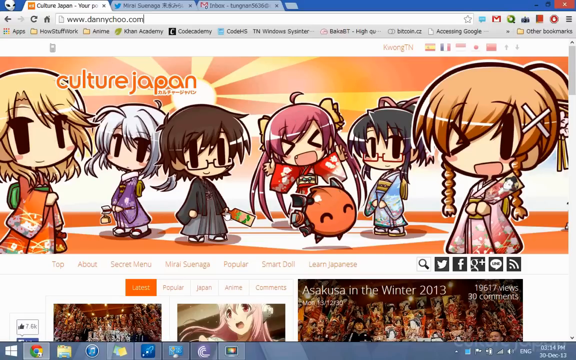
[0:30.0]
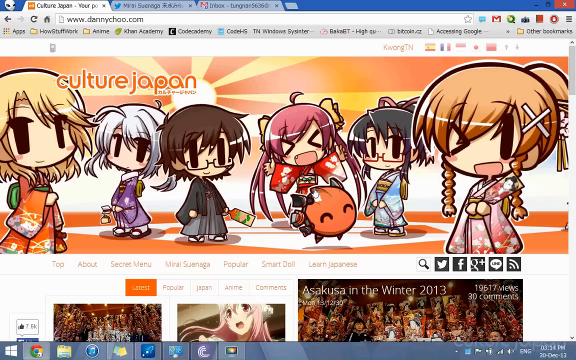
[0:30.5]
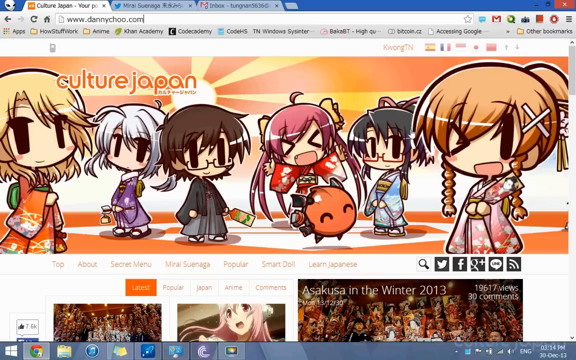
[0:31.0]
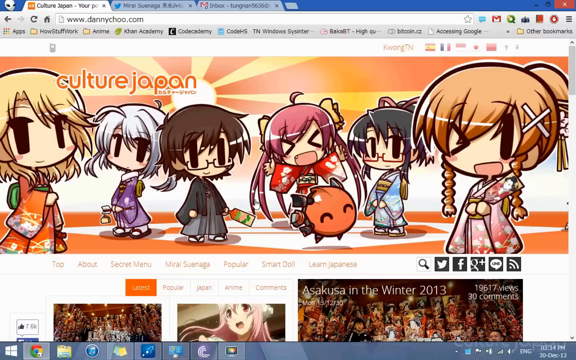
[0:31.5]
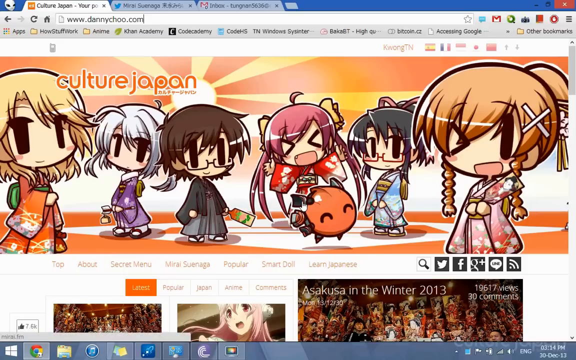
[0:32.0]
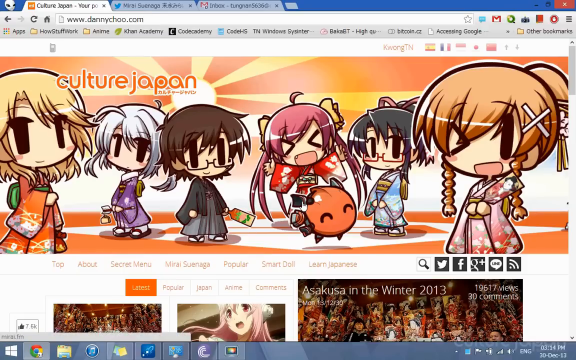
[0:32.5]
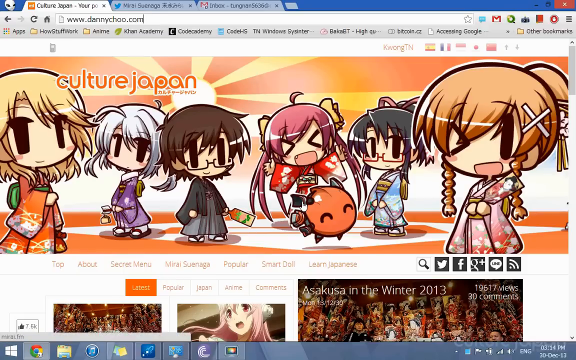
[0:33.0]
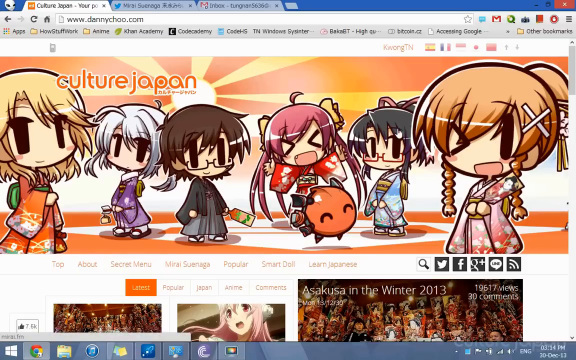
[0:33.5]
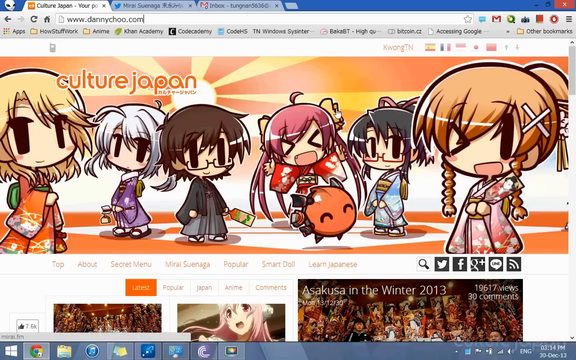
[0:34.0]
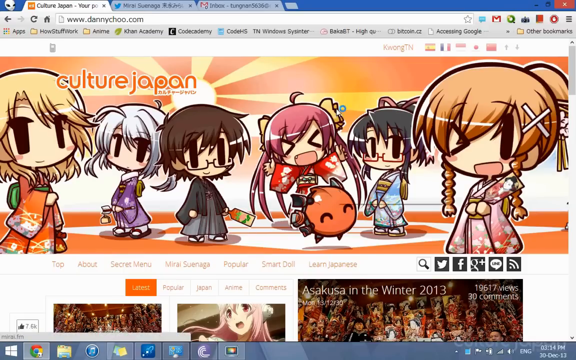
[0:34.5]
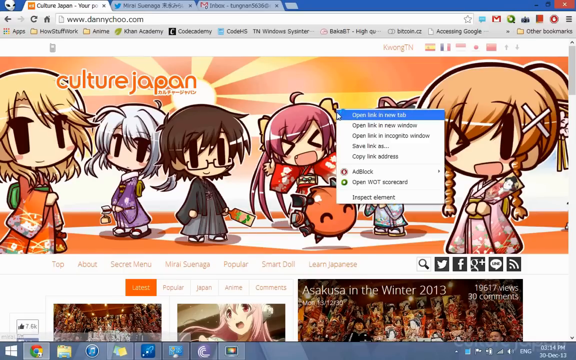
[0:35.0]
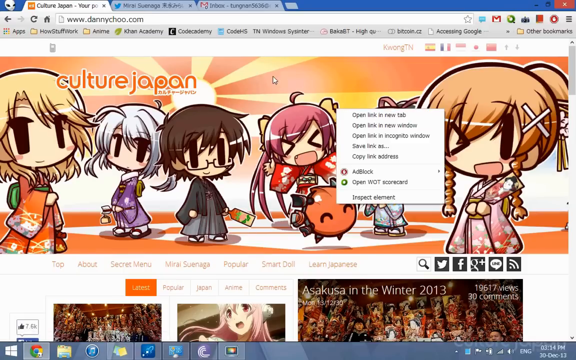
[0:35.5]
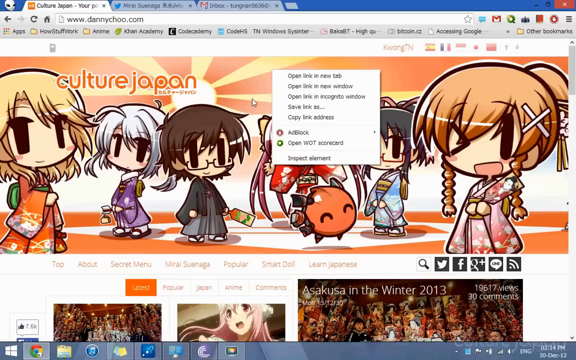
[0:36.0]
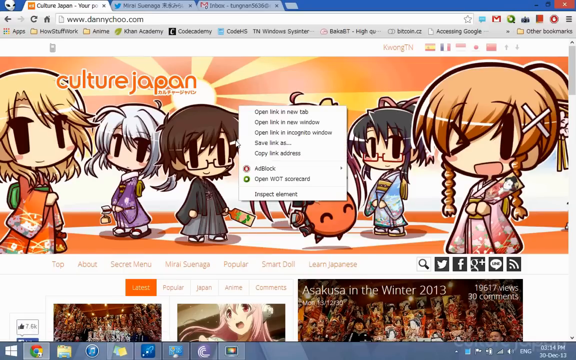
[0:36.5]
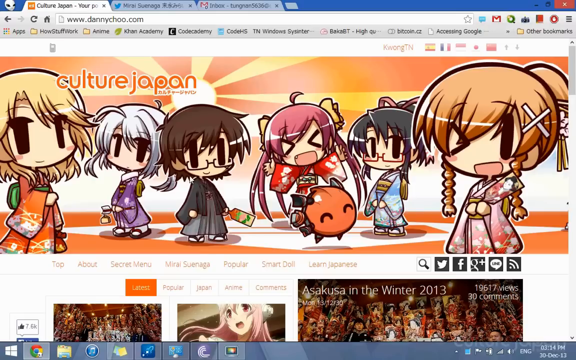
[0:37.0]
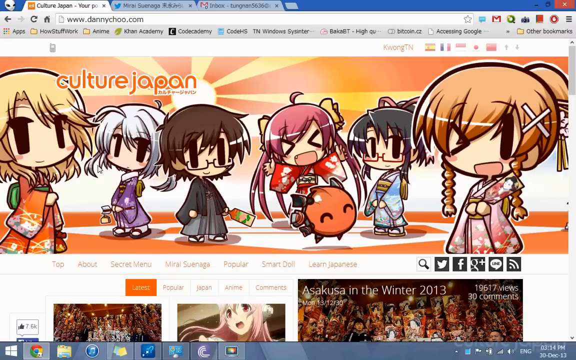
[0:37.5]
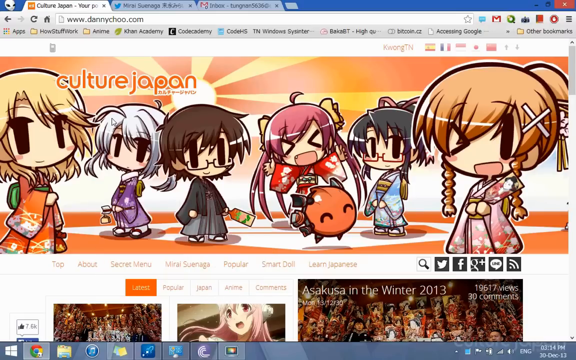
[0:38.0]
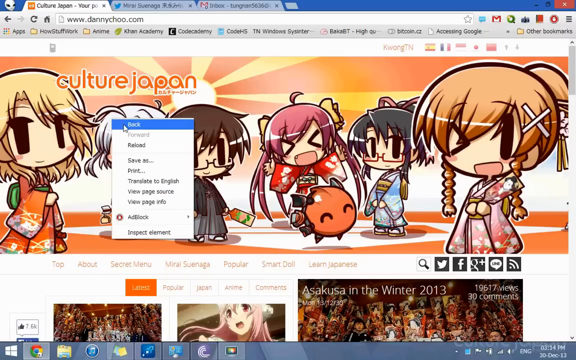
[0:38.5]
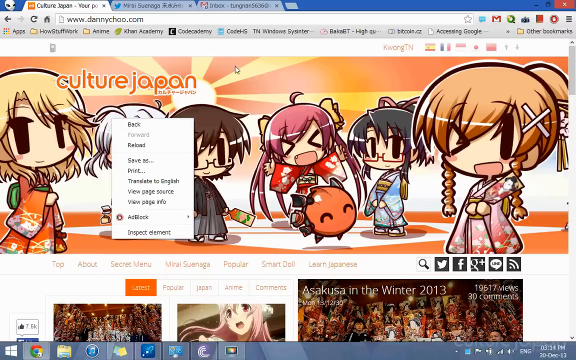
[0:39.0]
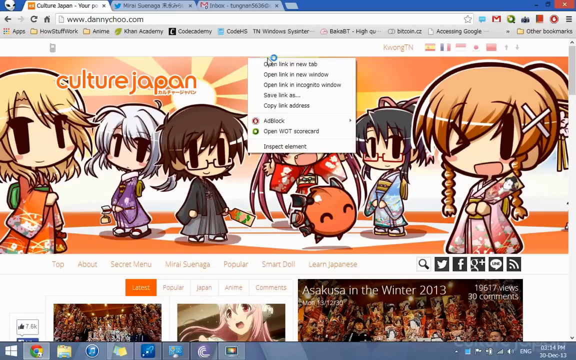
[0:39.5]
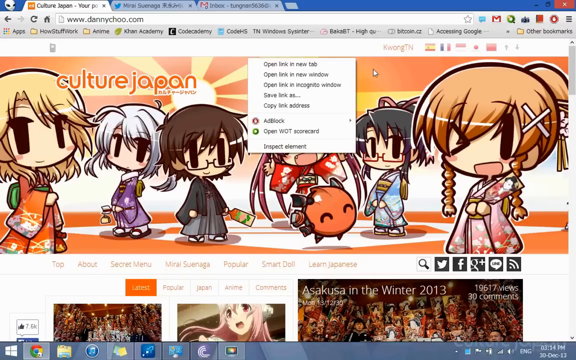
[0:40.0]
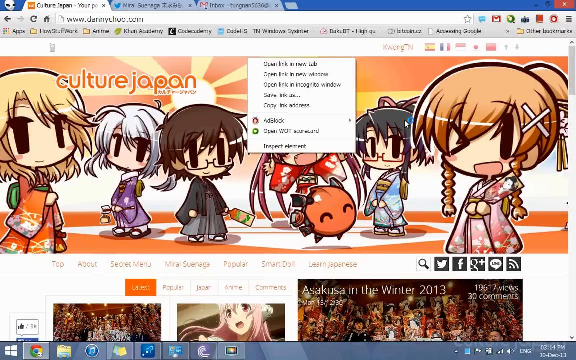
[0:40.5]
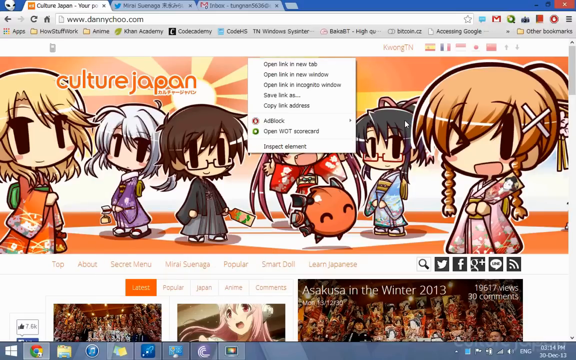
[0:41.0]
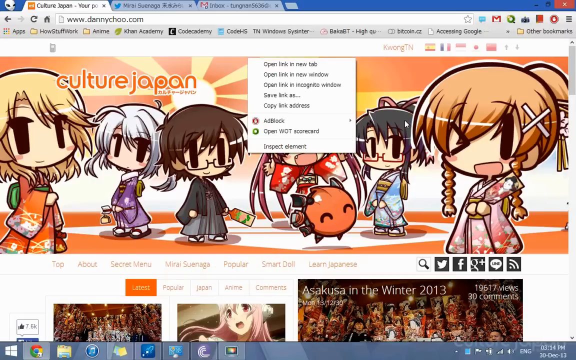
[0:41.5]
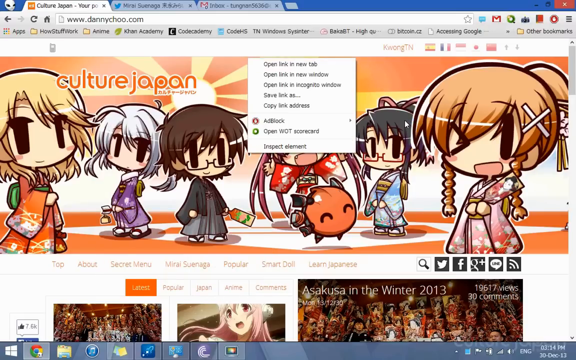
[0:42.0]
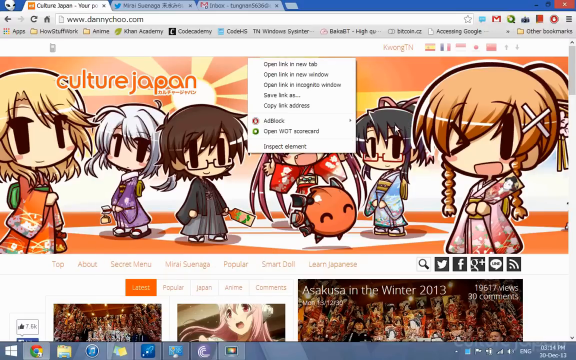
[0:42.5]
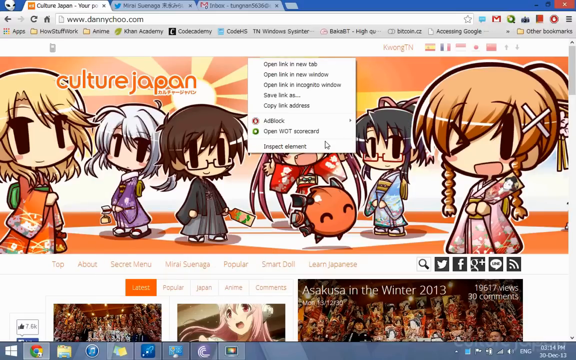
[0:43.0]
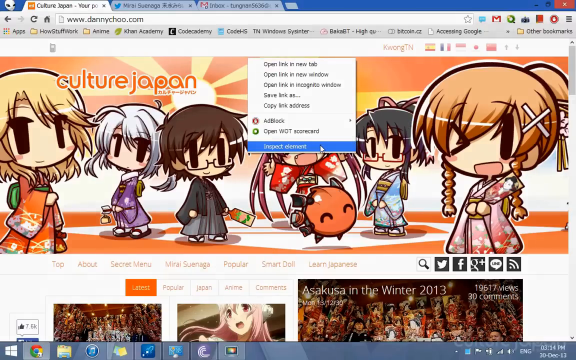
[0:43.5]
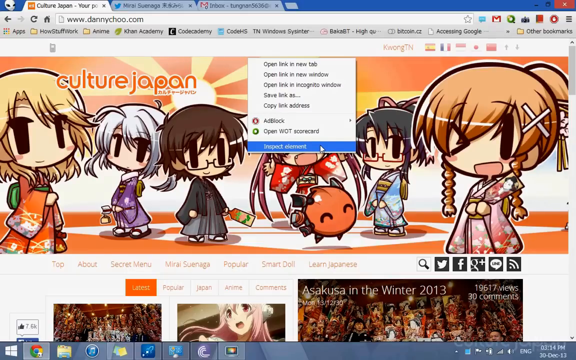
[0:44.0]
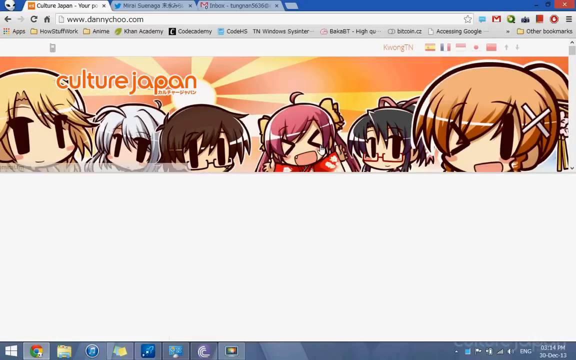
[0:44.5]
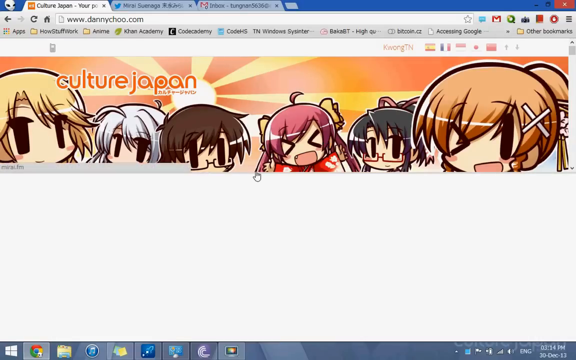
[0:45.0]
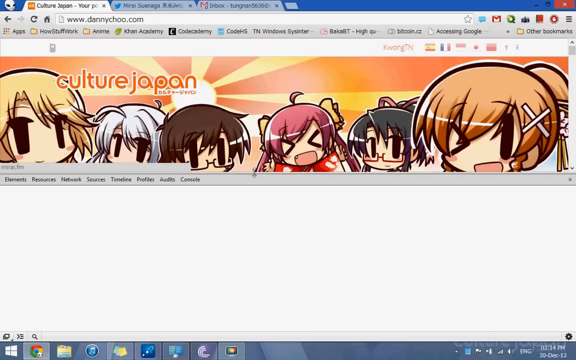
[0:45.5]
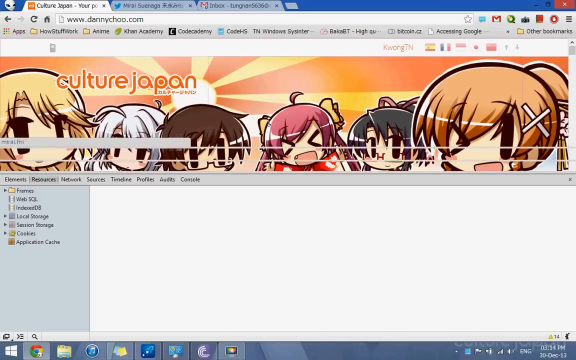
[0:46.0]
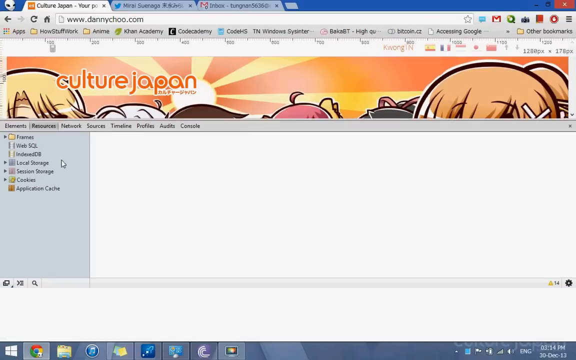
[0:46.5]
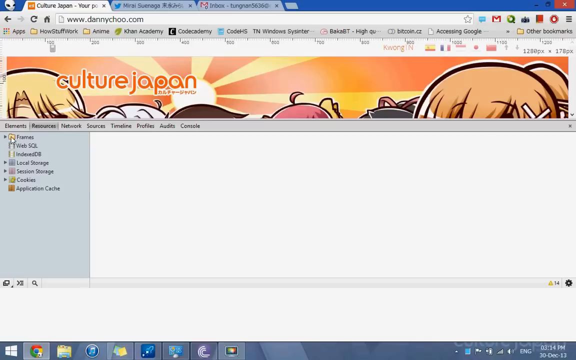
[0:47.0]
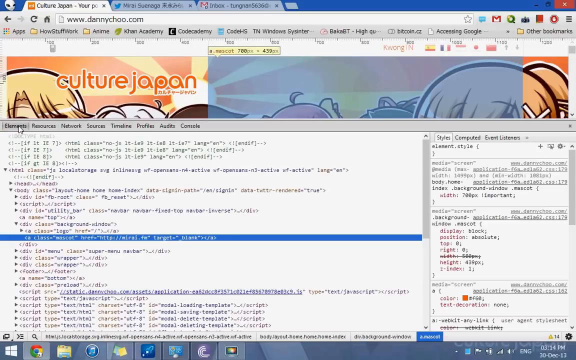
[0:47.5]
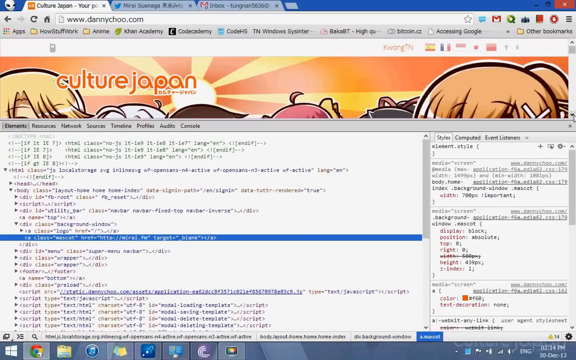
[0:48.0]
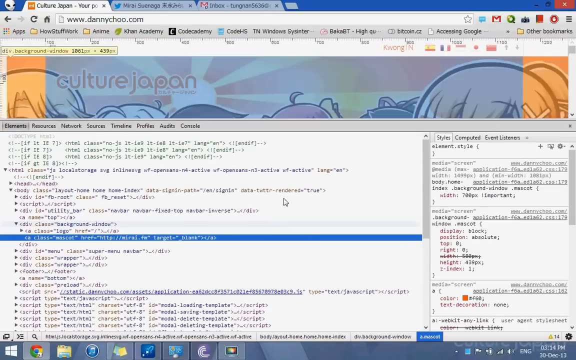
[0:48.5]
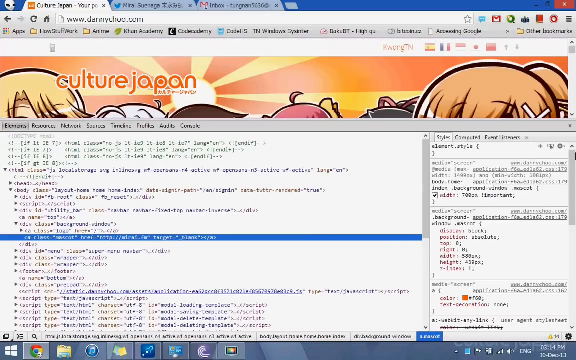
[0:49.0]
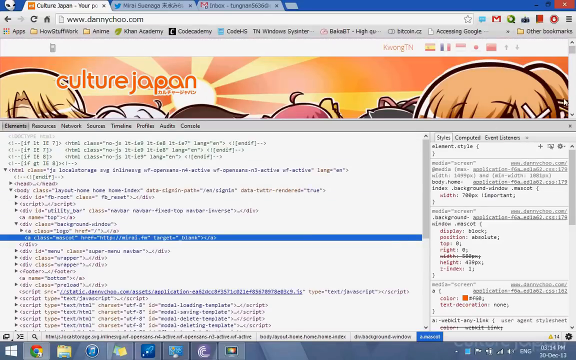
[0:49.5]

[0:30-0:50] The DannyChoo.com website is open, showing "Culture Japan" and six different characters on the main banner. They all look young and small, with different colored hair and very big eyes, giving them a cutesy look. Beneath them are website tabs reading "Top", "About", "Secret Menu", "Mirai Suenaga", "Popular", "Smart Doll" and "Learn Japanese". Below those is another row of tabs: "Latest", "Popular", "Japan", "Anime" and "Comments", with "Latest" highlighted. In the bottom right of the screen is the text "Asakusa in the Winter 2013". The cursor moves around and right-clicks many times, clicking out each time without selecting any option, until it finally clicks "Inspect Element". A window full of data, the Inspect Element data, then appears.